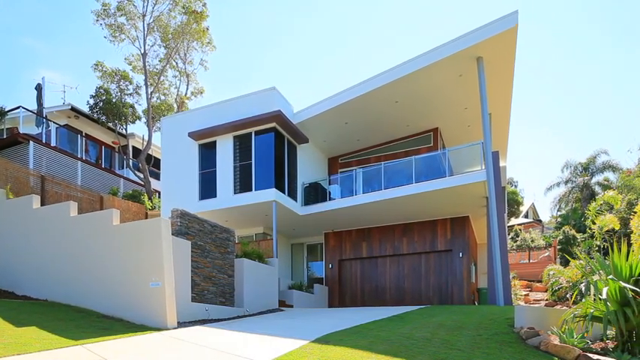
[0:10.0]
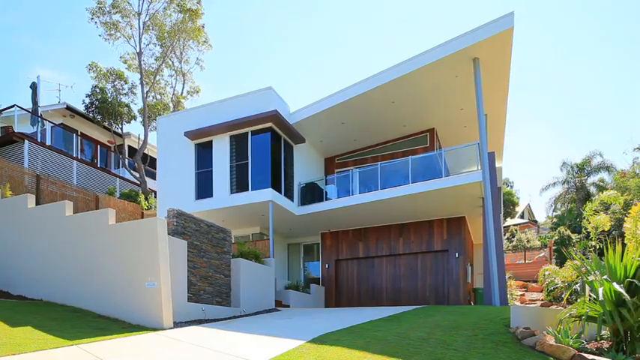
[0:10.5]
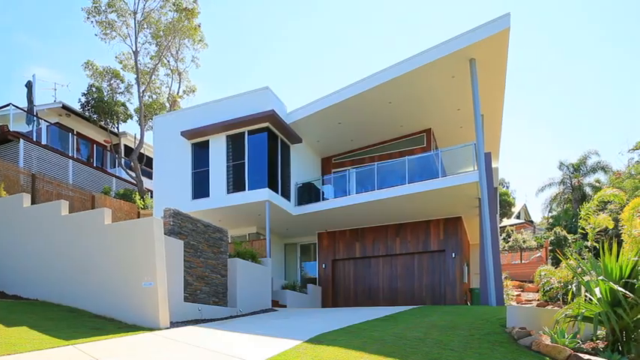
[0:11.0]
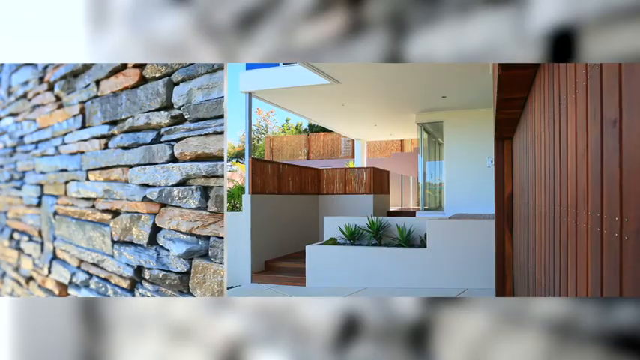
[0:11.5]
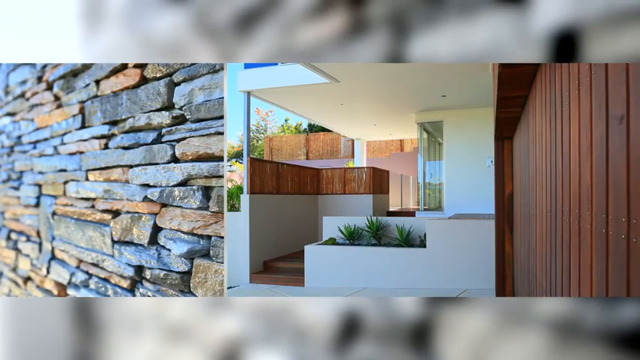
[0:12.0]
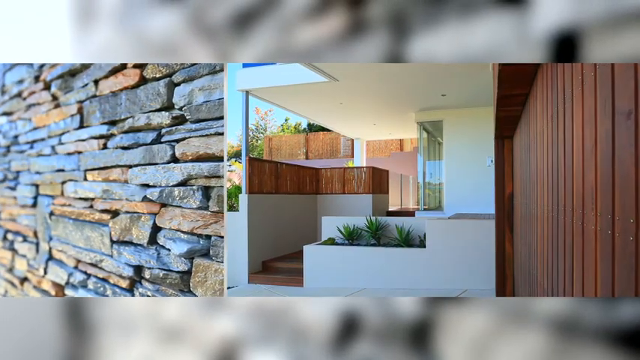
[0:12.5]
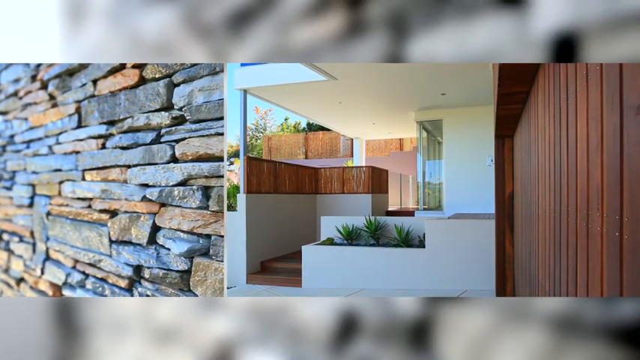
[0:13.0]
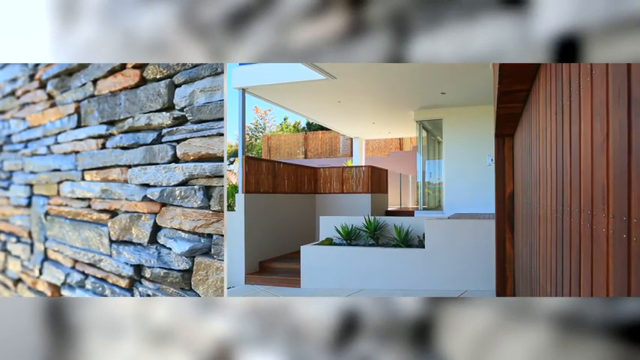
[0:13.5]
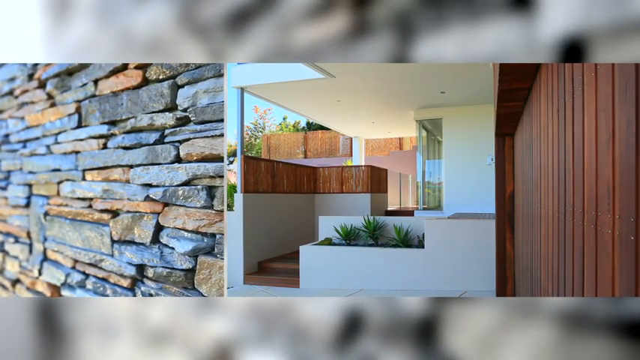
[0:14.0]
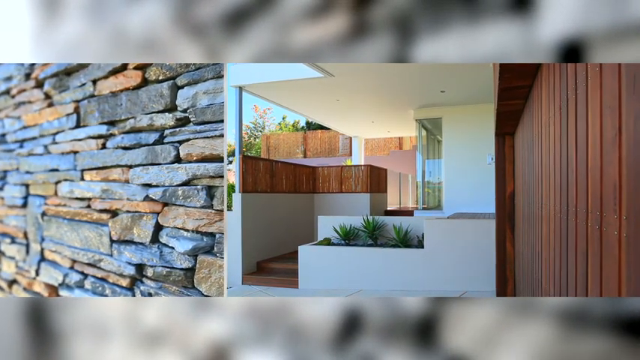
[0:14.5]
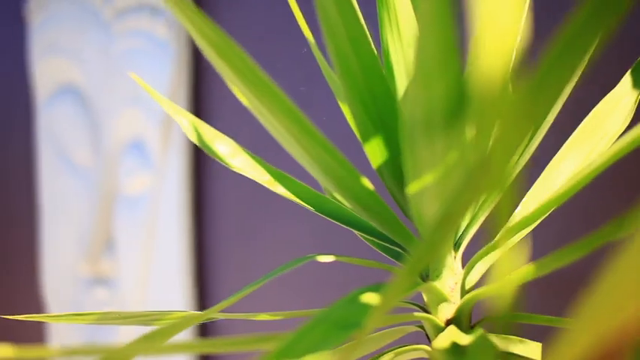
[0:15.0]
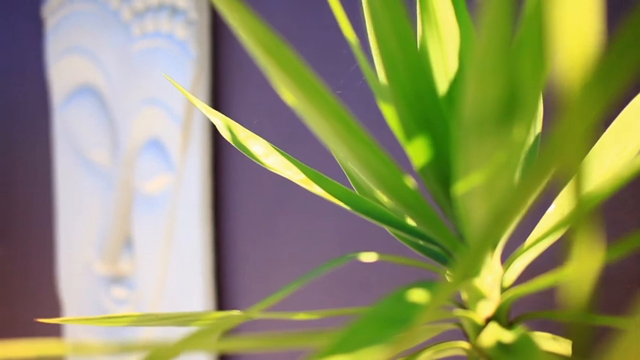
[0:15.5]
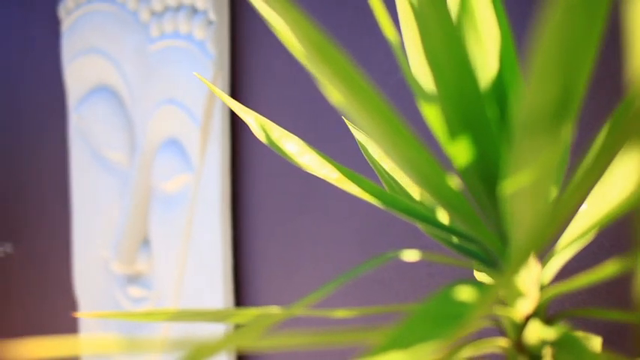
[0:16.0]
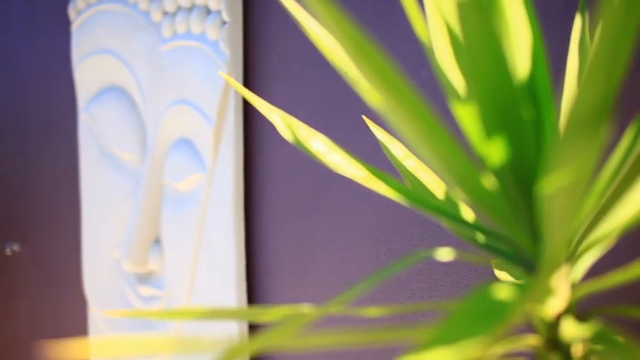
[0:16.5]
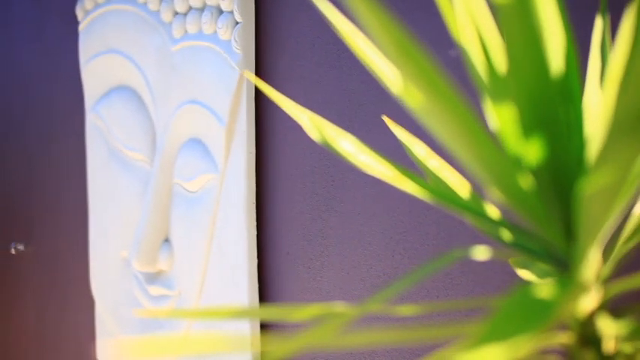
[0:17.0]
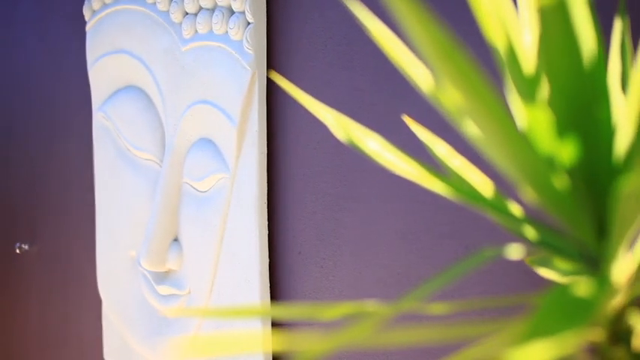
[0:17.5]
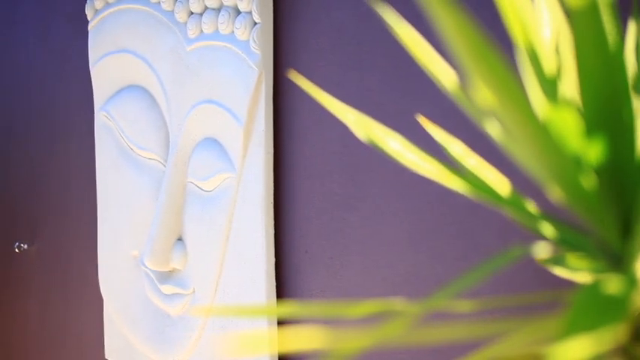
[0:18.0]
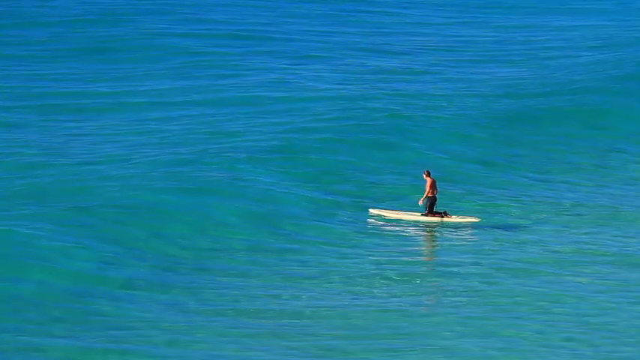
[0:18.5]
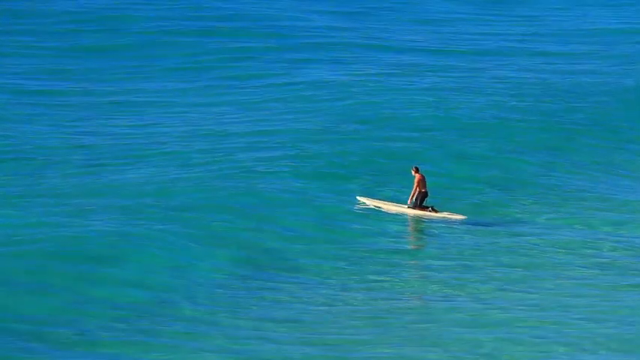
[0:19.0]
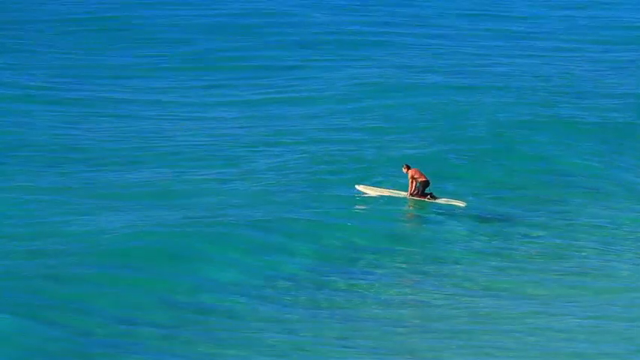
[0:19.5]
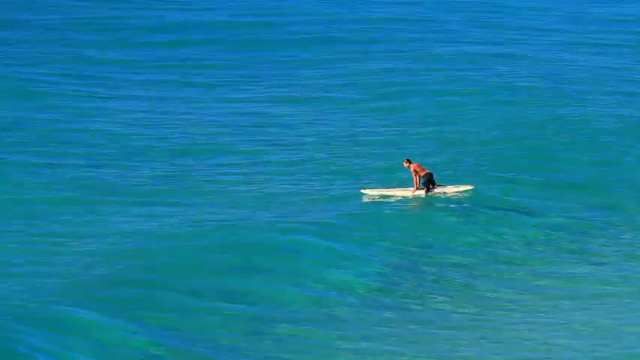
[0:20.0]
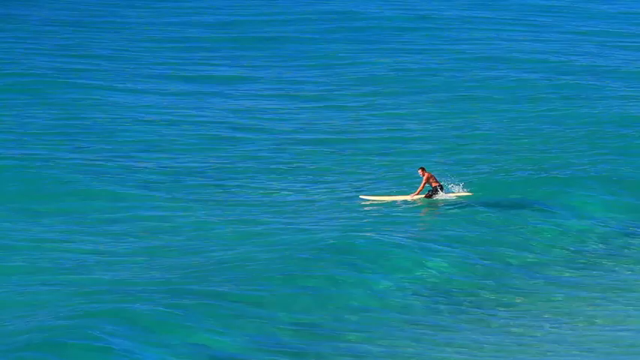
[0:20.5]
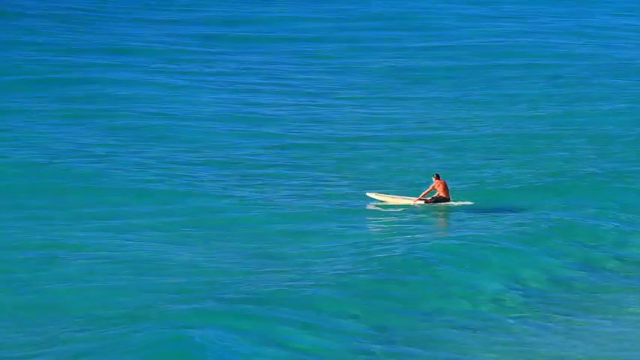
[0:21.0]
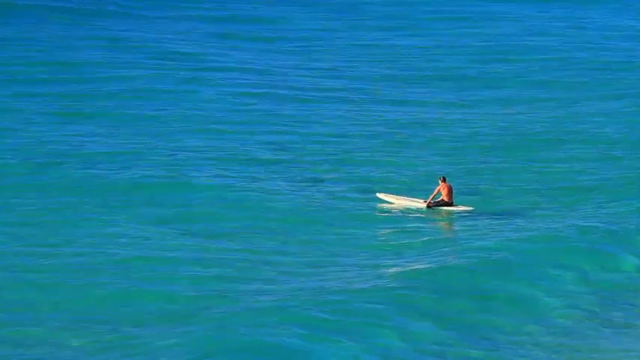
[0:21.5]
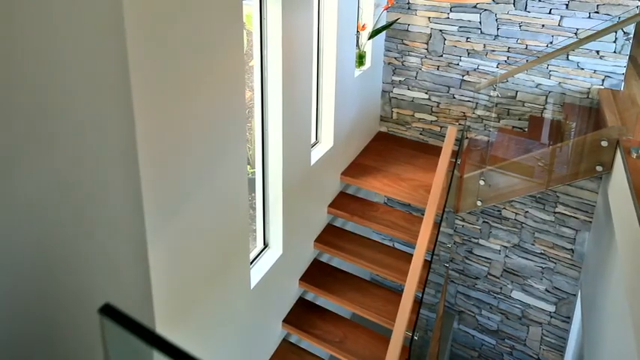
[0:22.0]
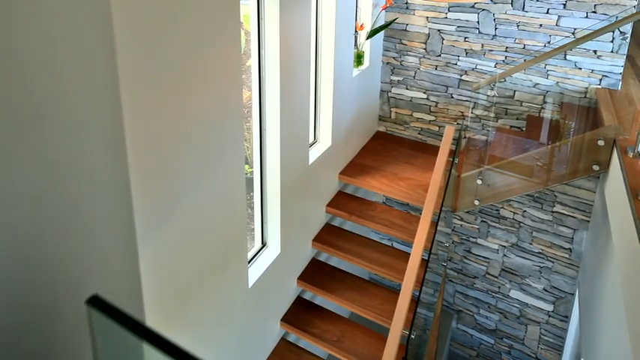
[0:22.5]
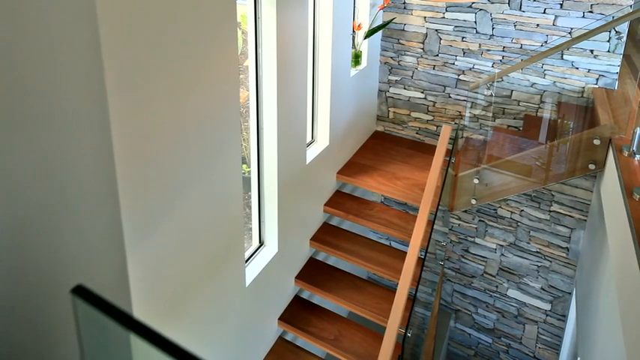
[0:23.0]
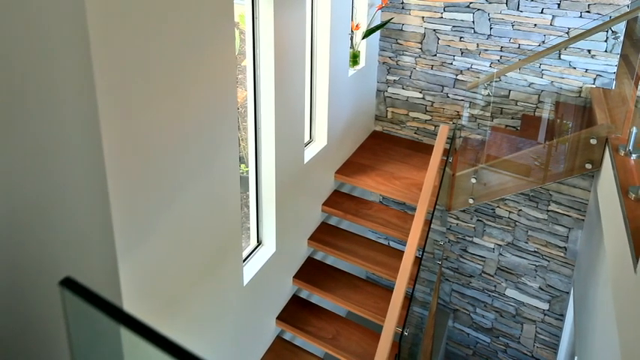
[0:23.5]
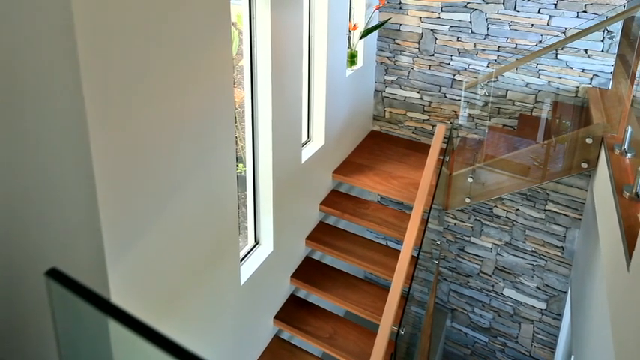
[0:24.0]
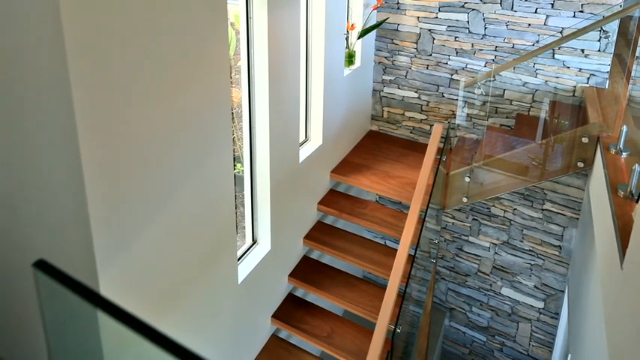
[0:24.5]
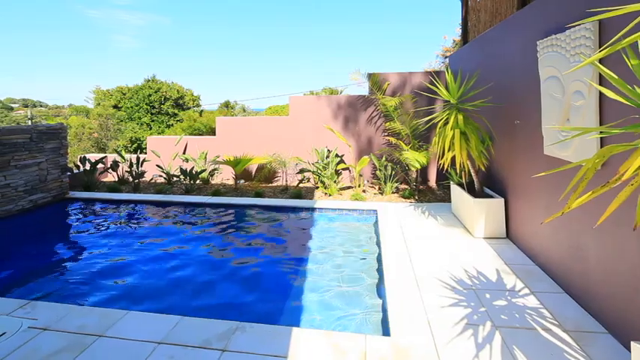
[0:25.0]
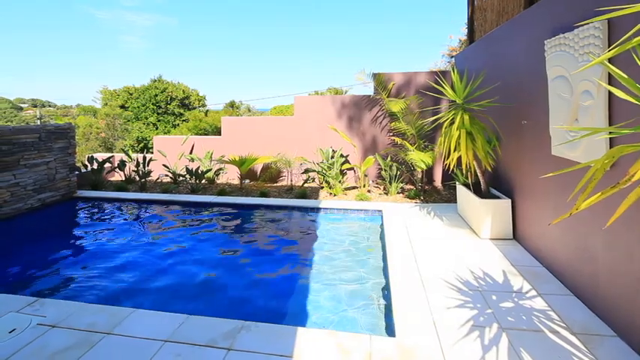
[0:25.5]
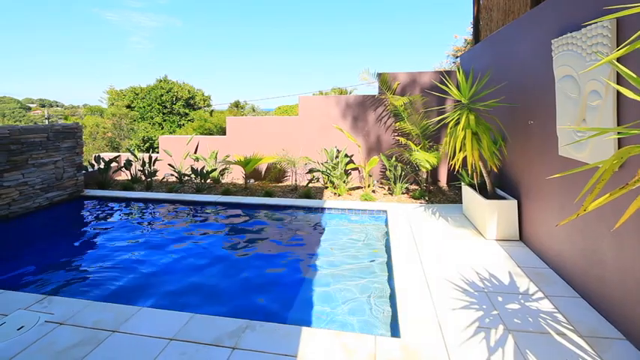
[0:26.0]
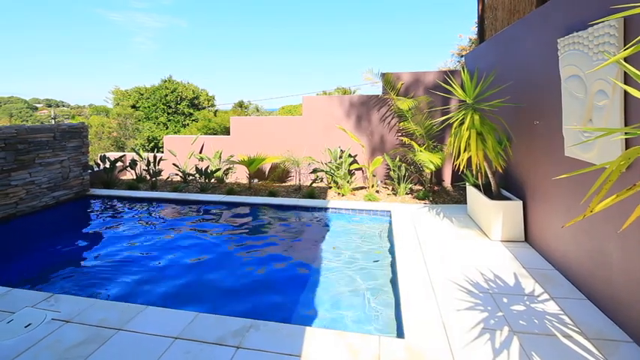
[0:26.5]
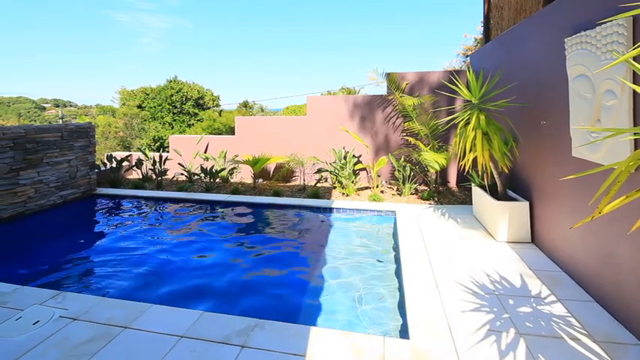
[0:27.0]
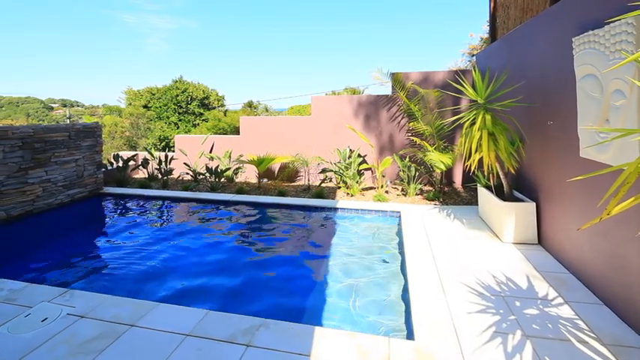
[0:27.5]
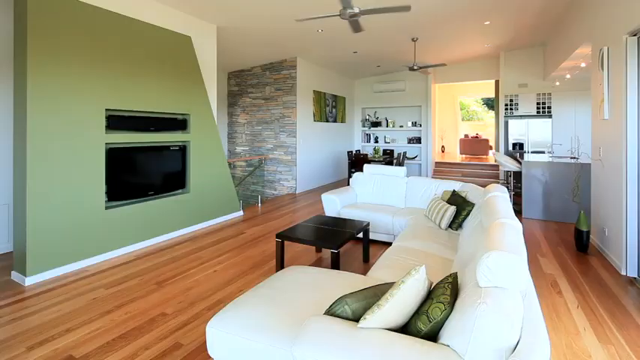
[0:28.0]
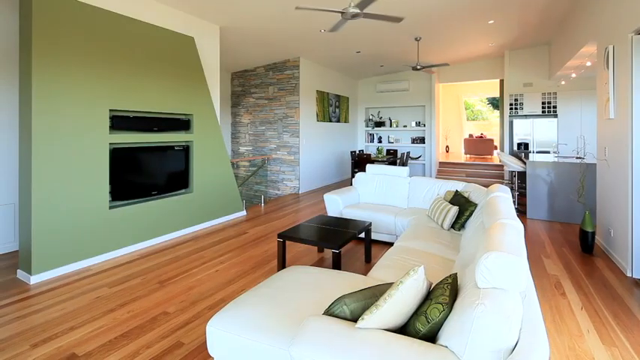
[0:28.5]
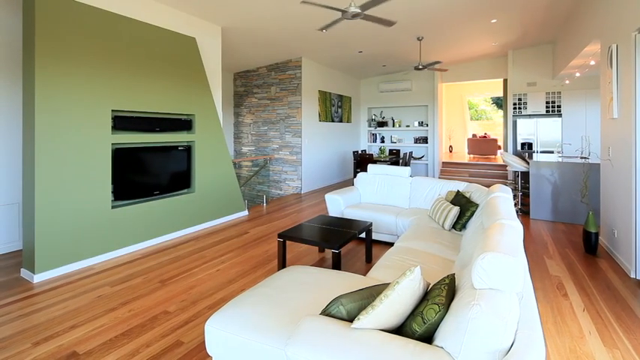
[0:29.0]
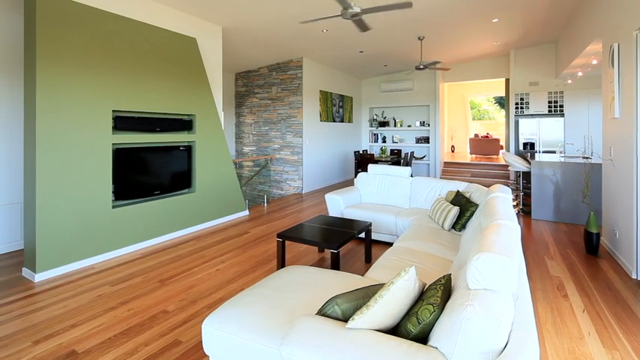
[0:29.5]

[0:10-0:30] Indoor shots of the house follow. First comes a shot of the walkway, then some plants going outside the house. The video cuts back to the water, where what looks to be a surfer is getting ready to go out into the water; he is on a white surfboard and wears a lifejacket. It then cuts back inside the building, showing a staircase that goes up one side and then up another. The house also has a pool in the back. The square-shaped pool is a very dark bluish color because of the shadows, and there are no chairs by it, just the pool with some steps inside it.